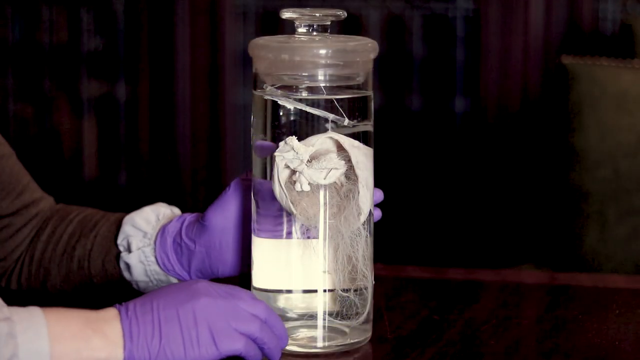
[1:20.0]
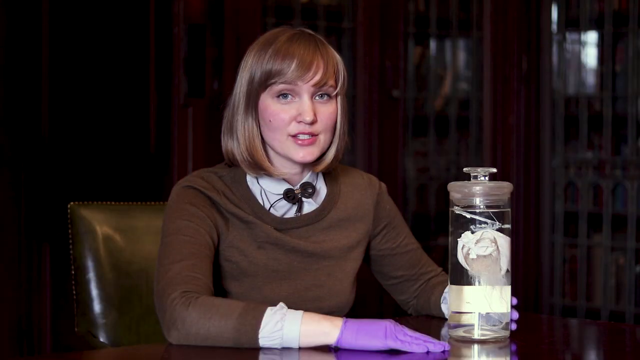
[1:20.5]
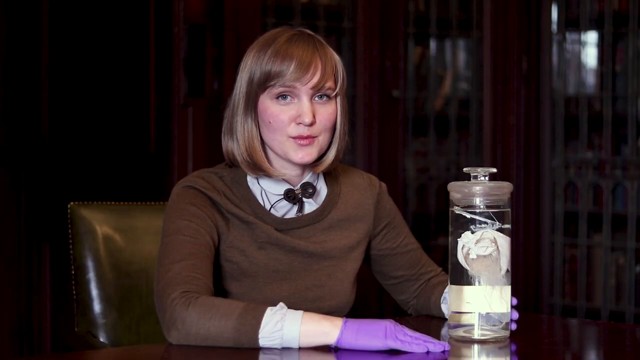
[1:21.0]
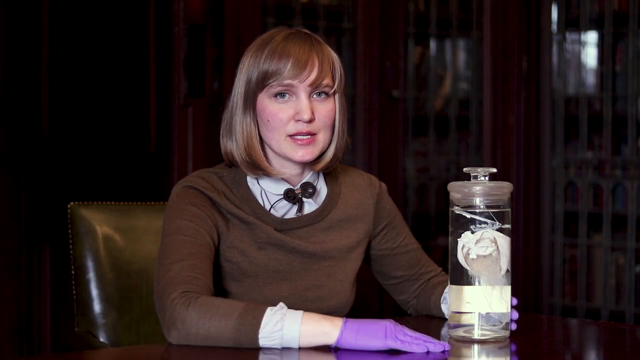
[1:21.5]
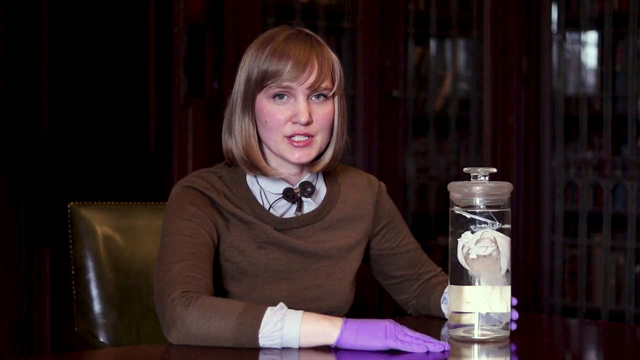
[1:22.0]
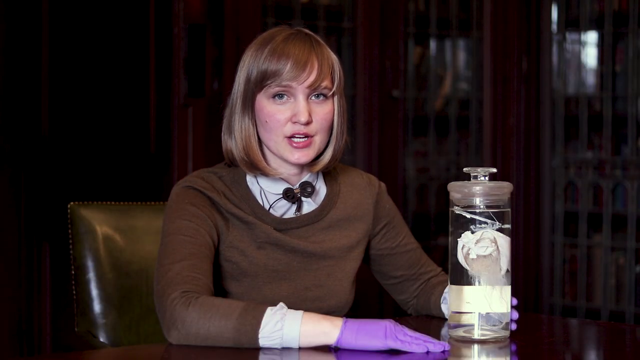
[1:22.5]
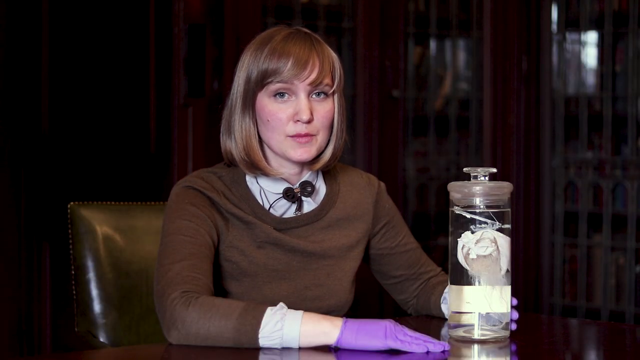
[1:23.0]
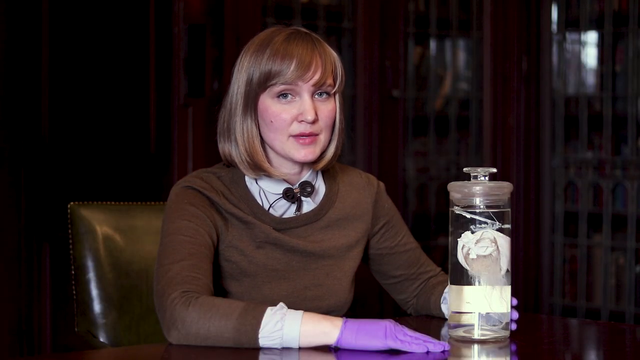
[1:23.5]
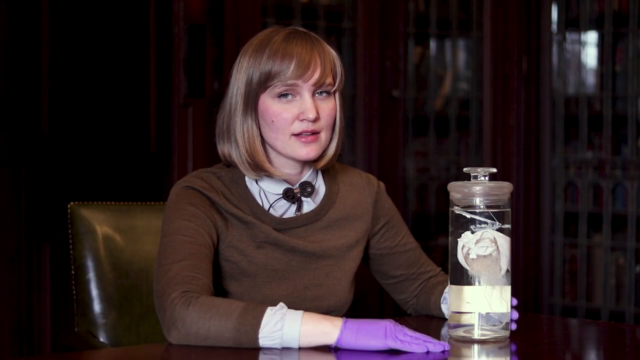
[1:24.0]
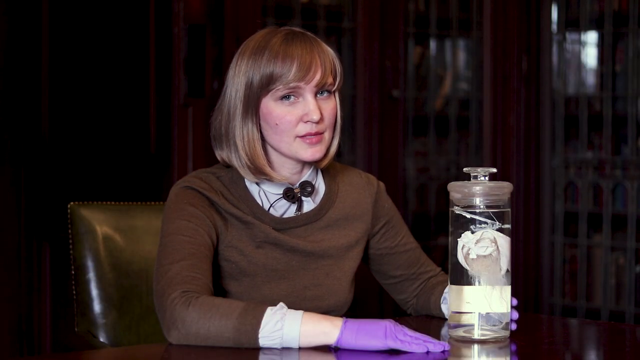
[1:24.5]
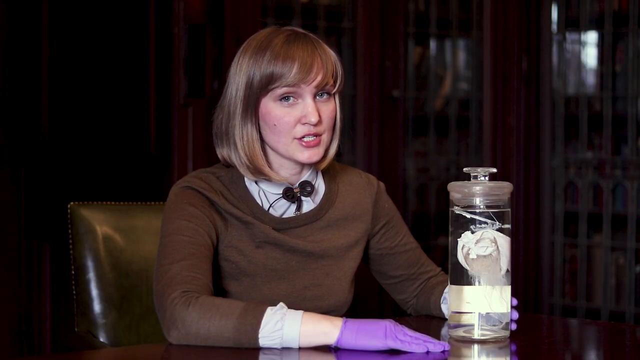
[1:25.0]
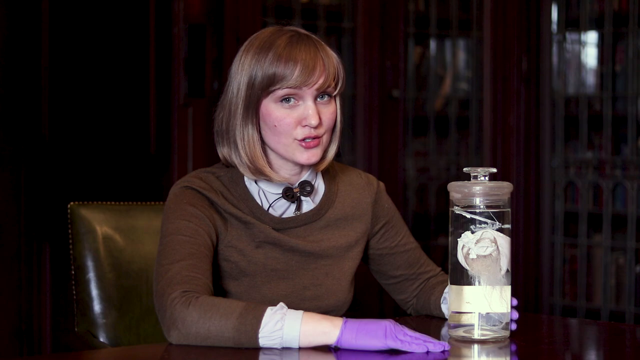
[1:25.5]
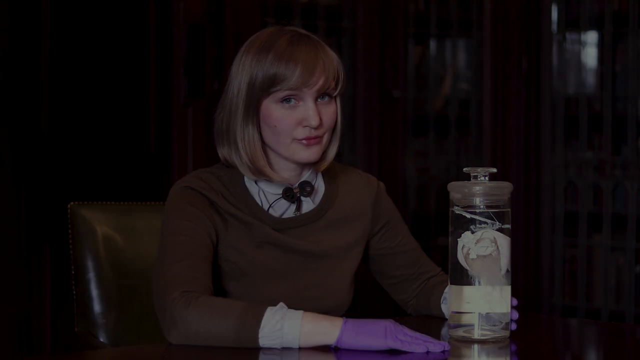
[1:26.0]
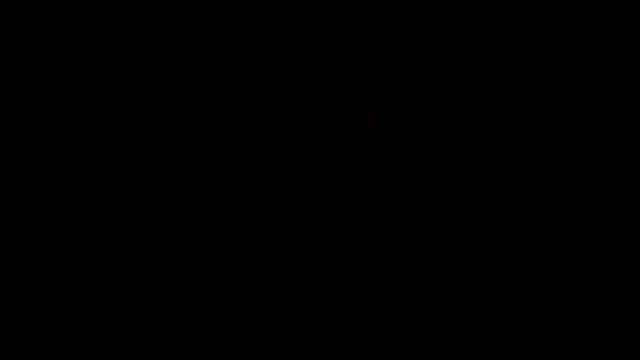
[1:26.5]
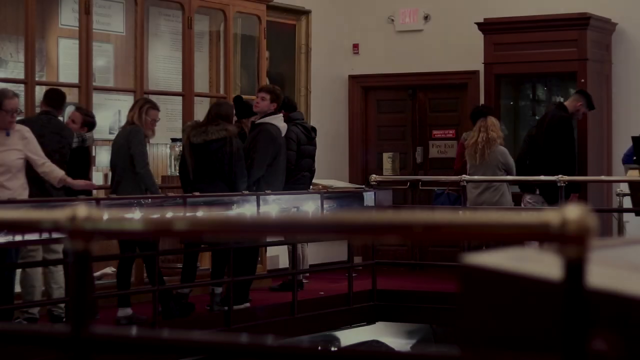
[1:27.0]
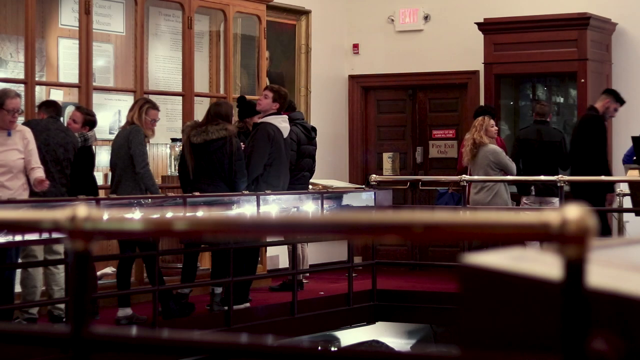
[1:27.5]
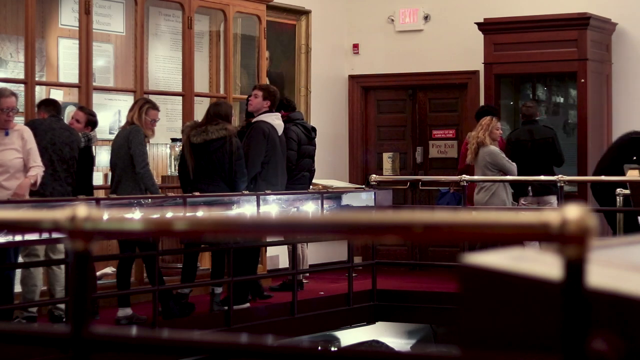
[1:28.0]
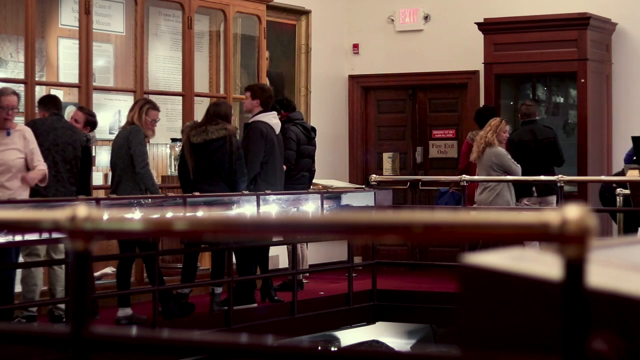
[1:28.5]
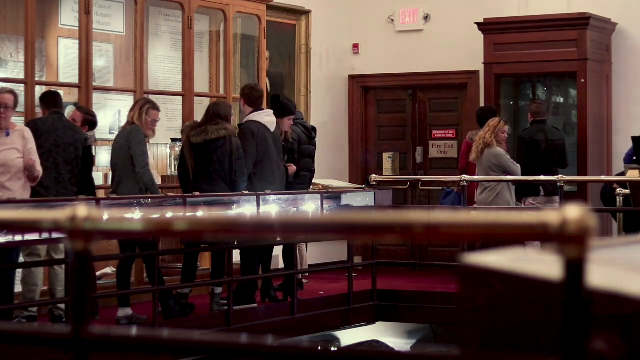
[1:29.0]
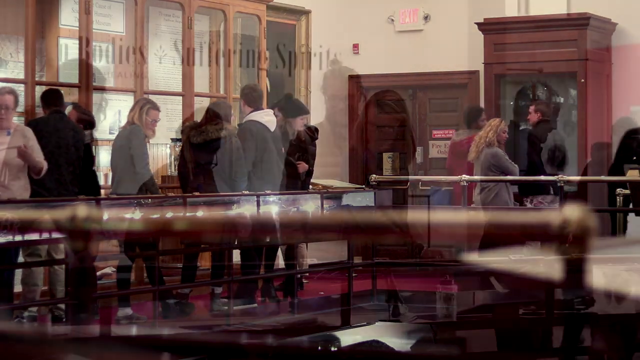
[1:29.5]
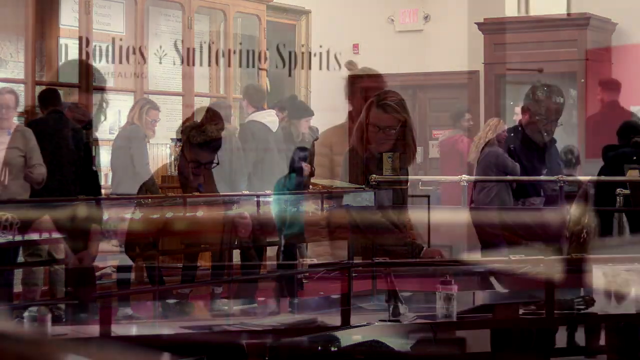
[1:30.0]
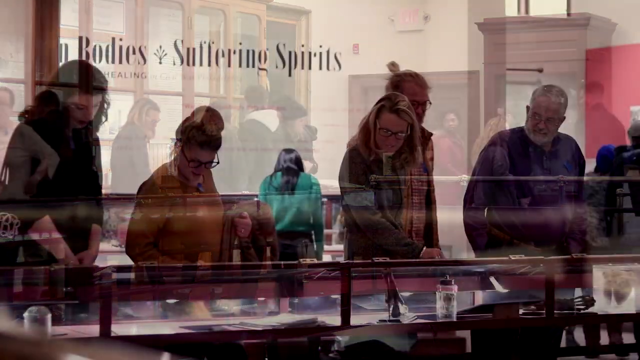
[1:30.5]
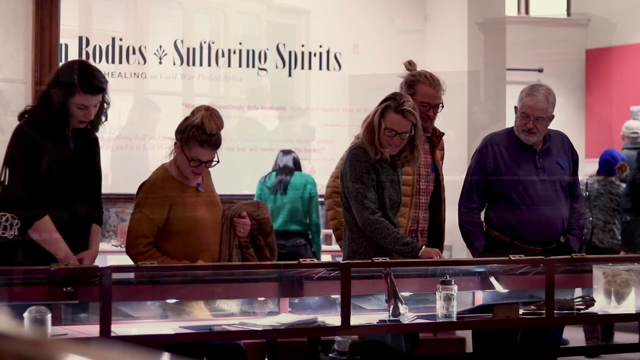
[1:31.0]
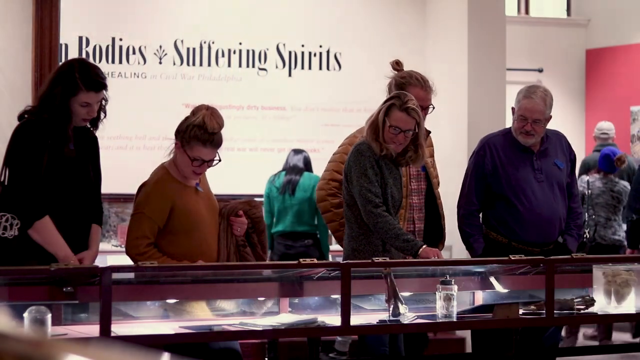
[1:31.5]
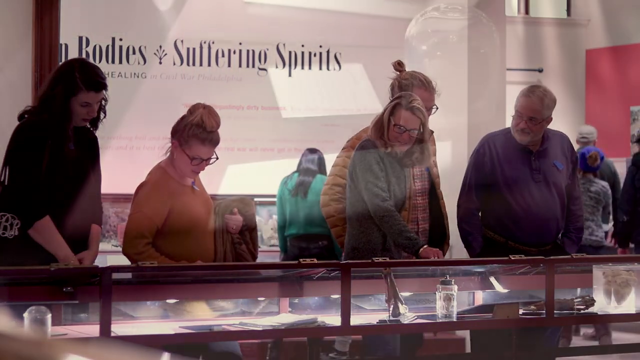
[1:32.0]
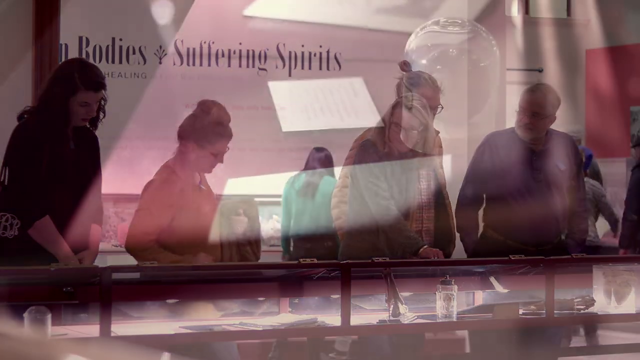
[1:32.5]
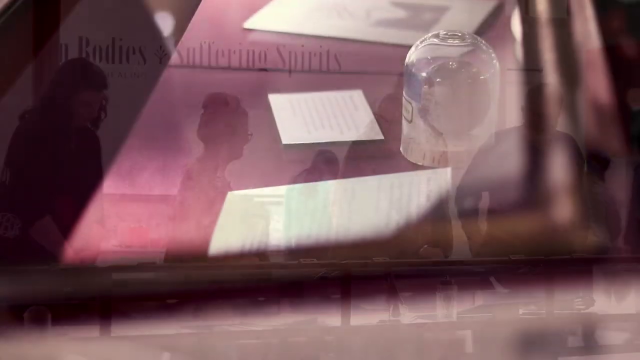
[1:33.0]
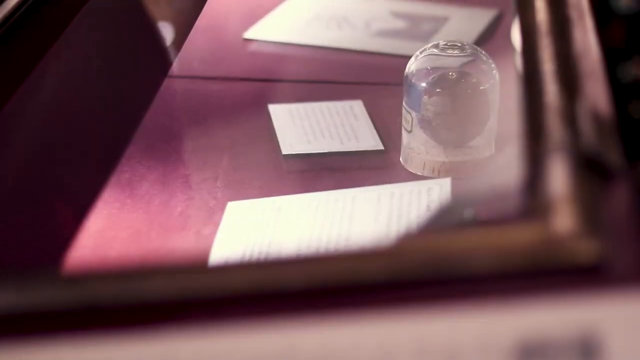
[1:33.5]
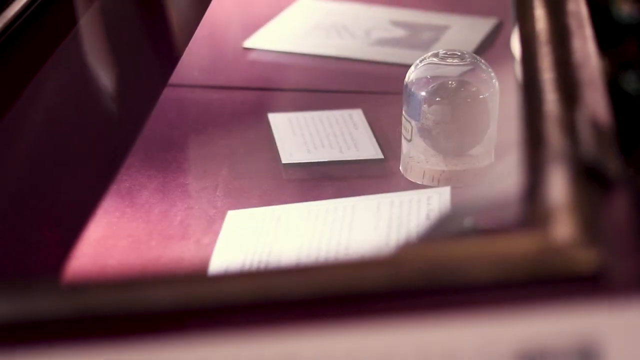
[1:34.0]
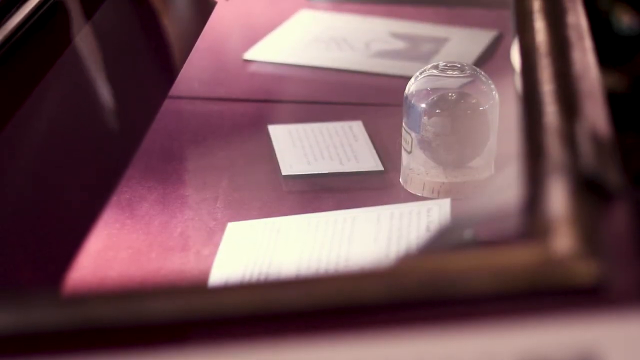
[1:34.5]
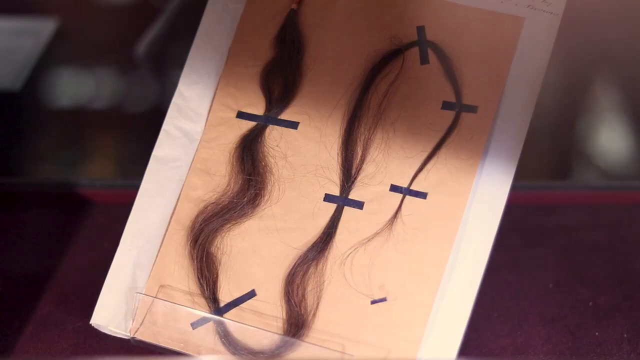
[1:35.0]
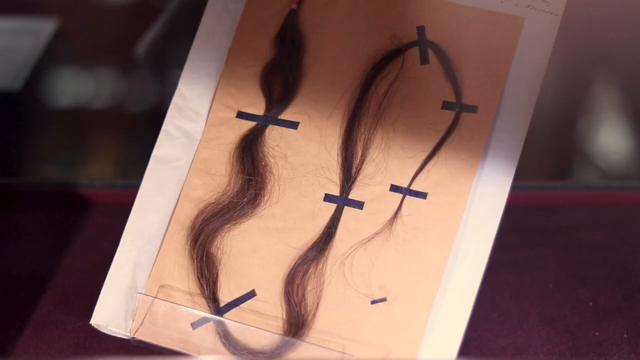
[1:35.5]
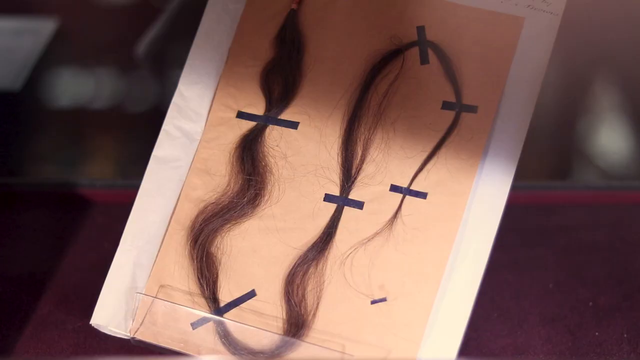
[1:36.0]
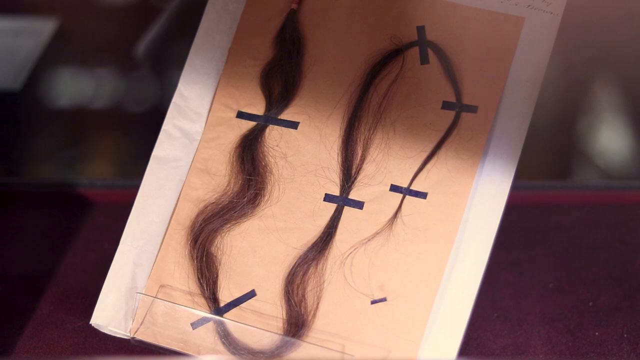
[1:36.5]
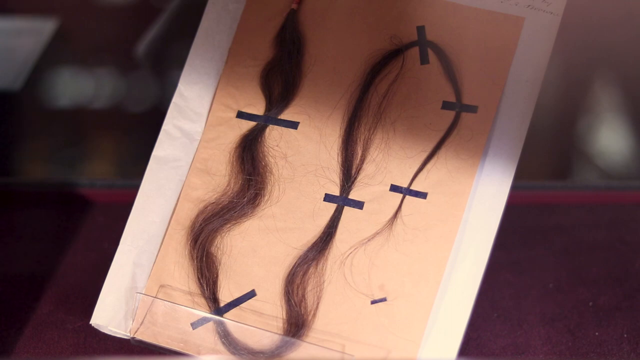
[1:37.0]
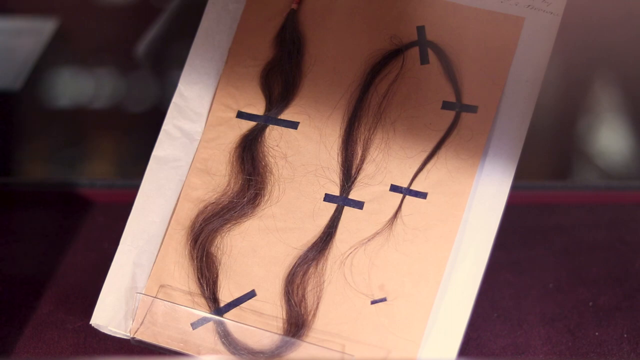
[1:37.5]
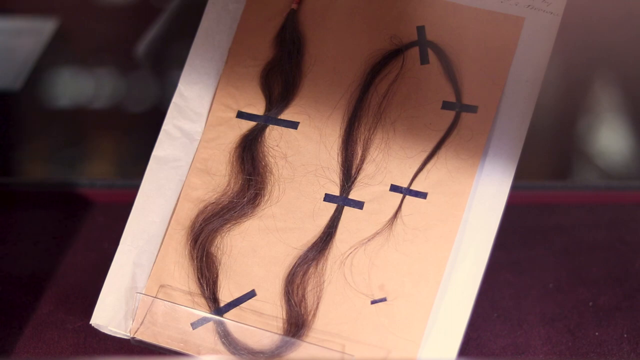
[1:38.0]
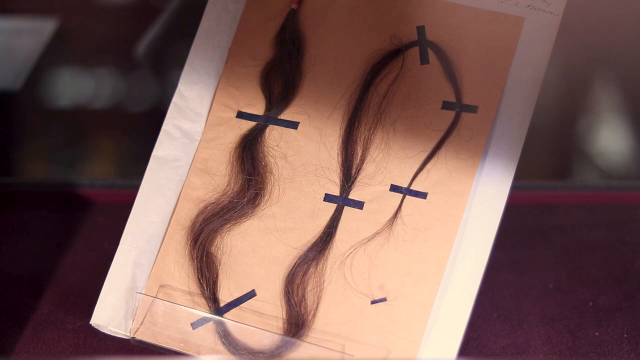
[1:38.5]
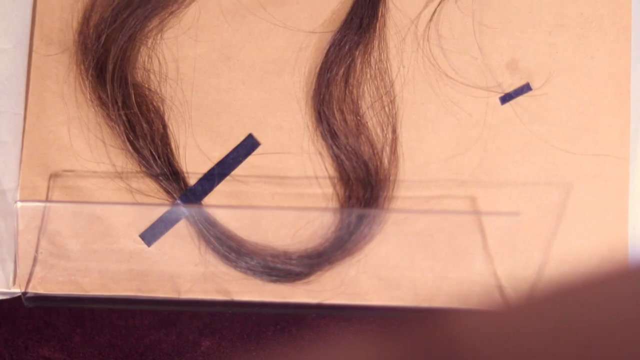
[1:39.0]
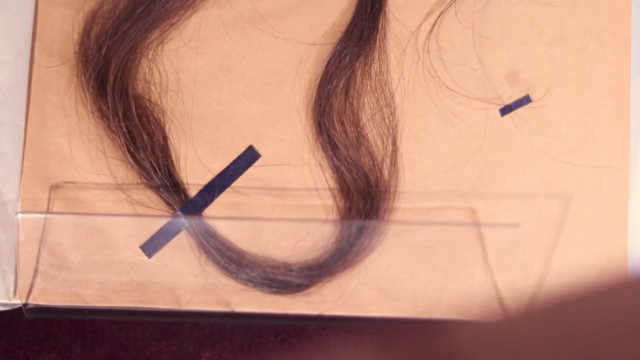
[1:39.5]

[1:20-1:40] The woman with the purple gloves holds the specimen jar, then speaks to the camera, raising her right eyebrow. She has a mole on her right cheek and rests her right arm on the table. The video returns to the museum scene, where about ten people in shot look at things in cabinets made of dark brown wood, with a door at the back of the scene. The people are then seen again from the front: a woman in a mustard jumper, a gentleman in a puffy jacket and a man with a grey beard. They look at things in glass cases that have wooden frames in front of them. A small oval glass cloche covers something, with a small card with writing on it in front of it. Then two strands of hair appear, taped down with blue tape onto a board.